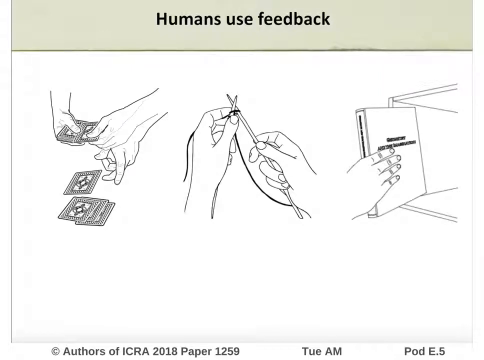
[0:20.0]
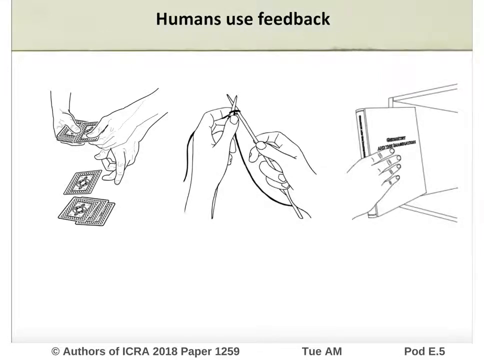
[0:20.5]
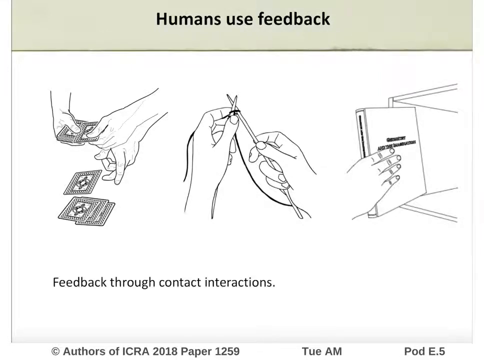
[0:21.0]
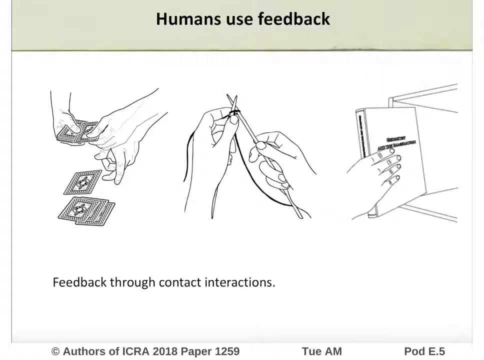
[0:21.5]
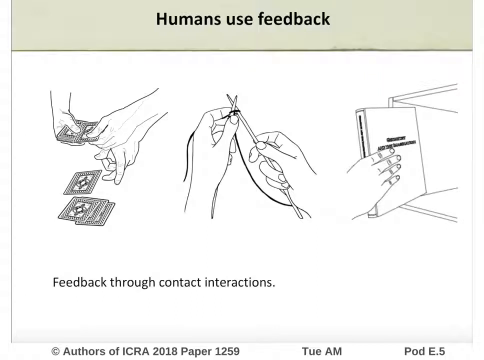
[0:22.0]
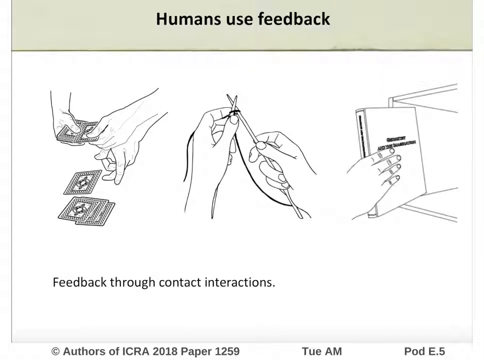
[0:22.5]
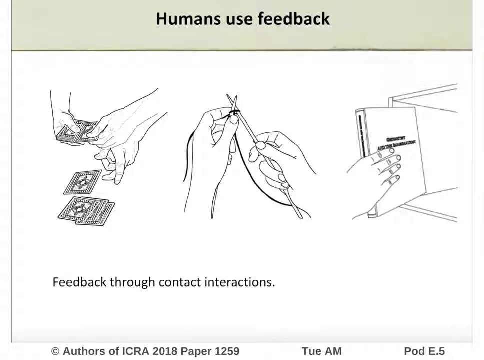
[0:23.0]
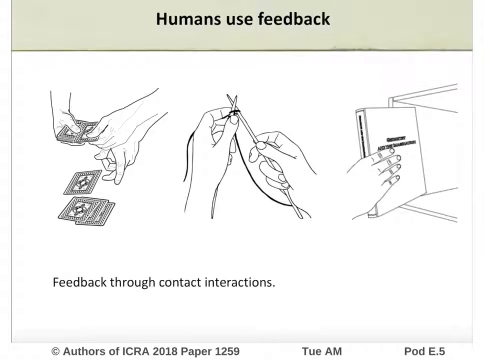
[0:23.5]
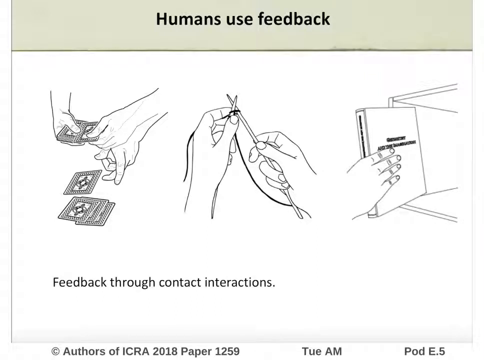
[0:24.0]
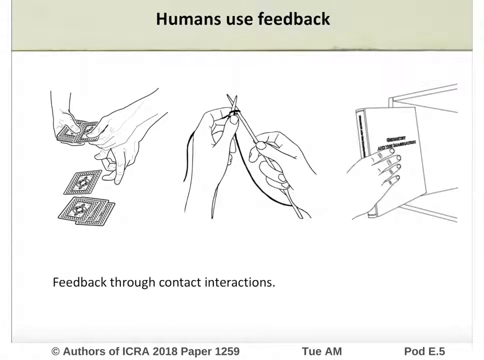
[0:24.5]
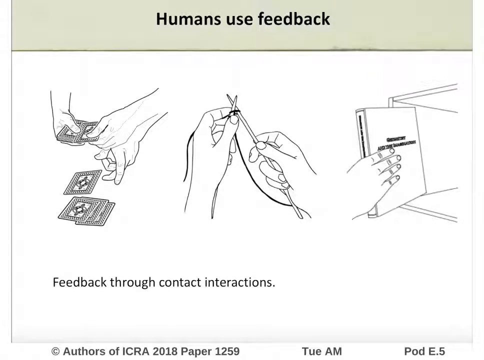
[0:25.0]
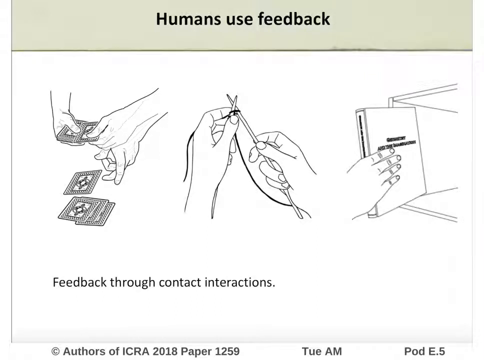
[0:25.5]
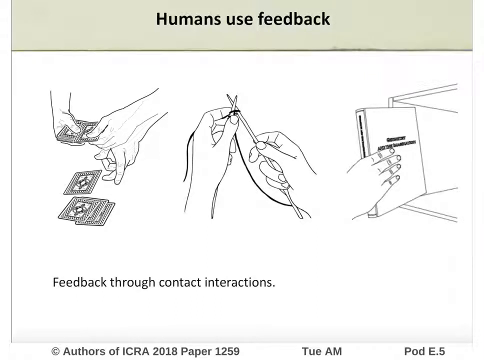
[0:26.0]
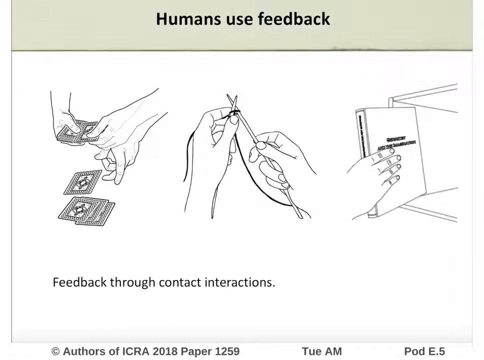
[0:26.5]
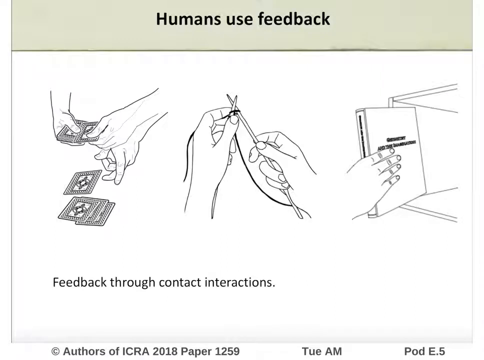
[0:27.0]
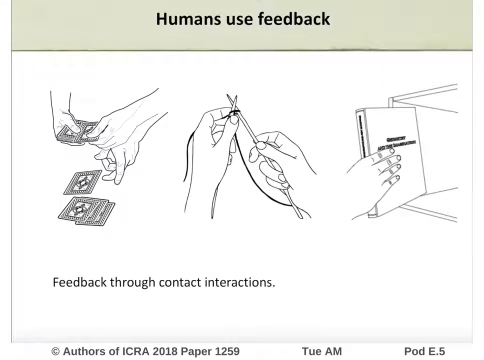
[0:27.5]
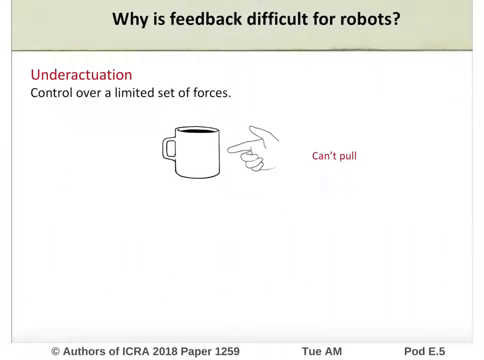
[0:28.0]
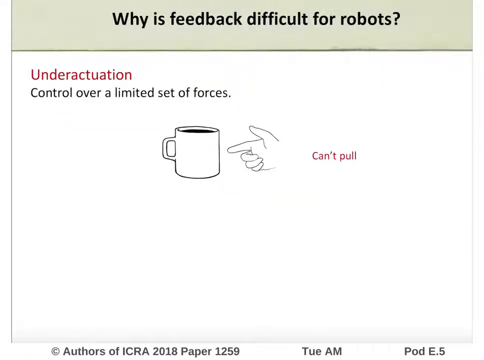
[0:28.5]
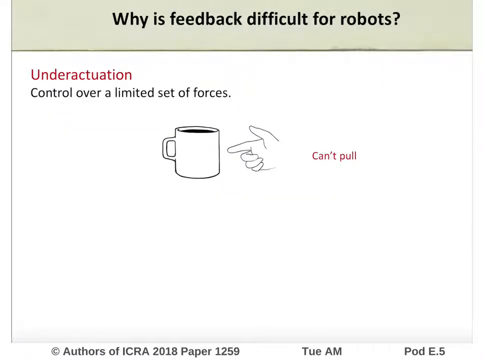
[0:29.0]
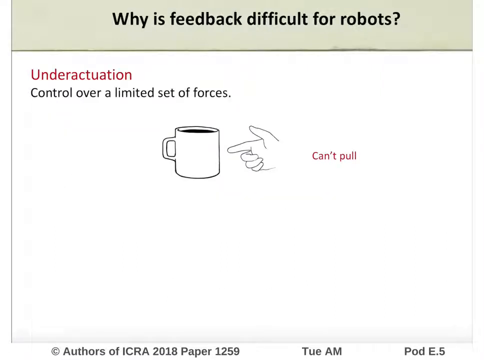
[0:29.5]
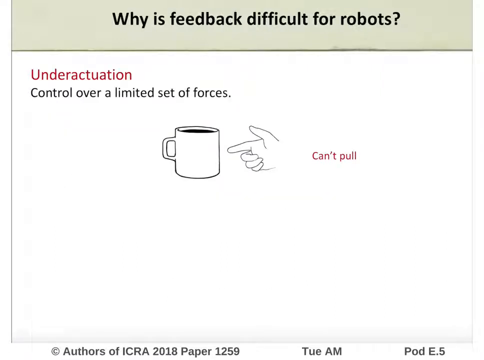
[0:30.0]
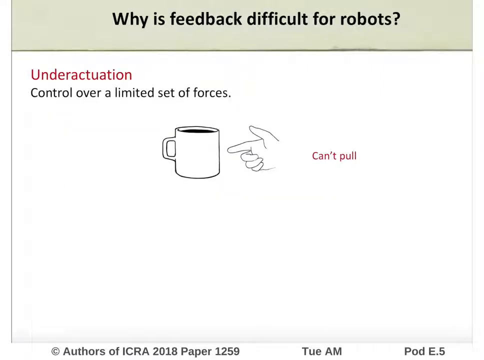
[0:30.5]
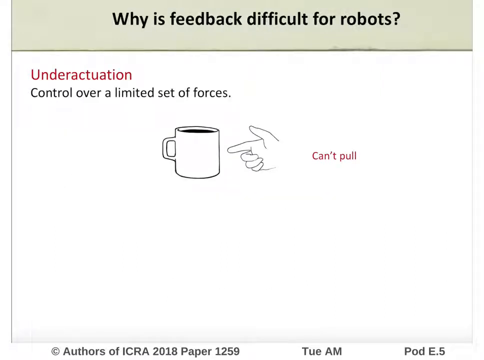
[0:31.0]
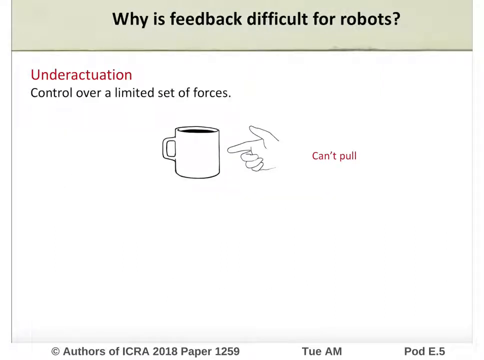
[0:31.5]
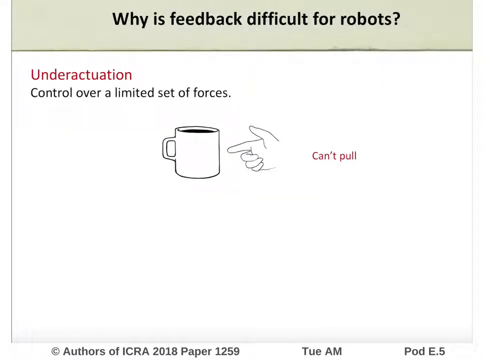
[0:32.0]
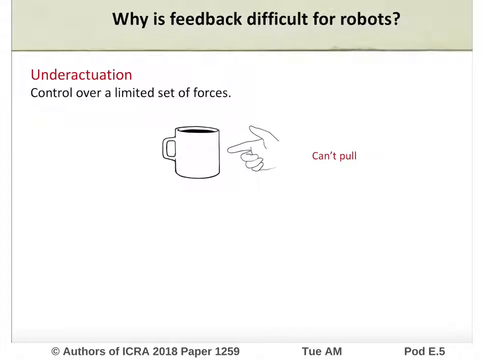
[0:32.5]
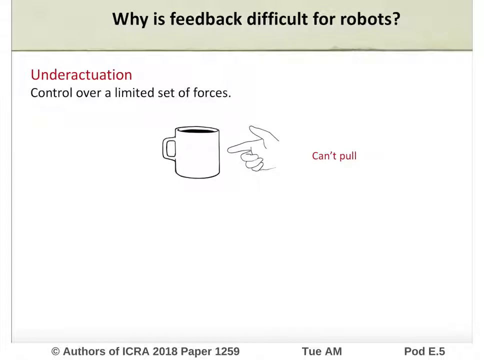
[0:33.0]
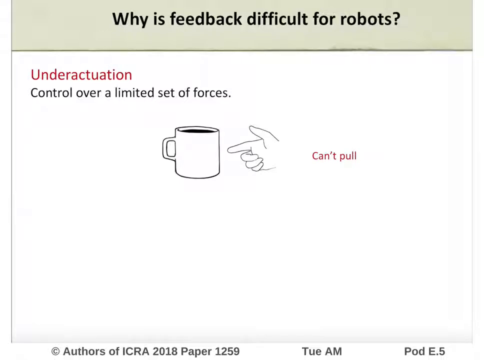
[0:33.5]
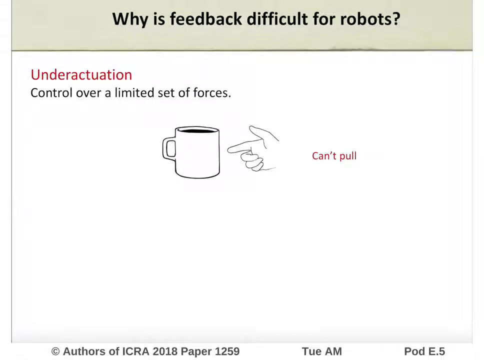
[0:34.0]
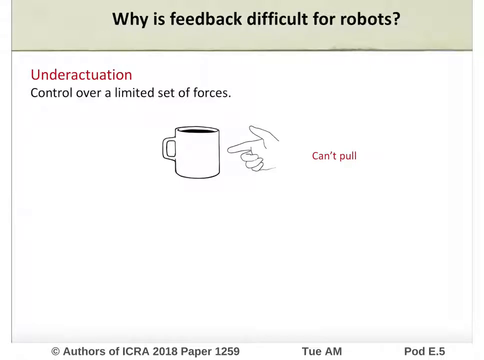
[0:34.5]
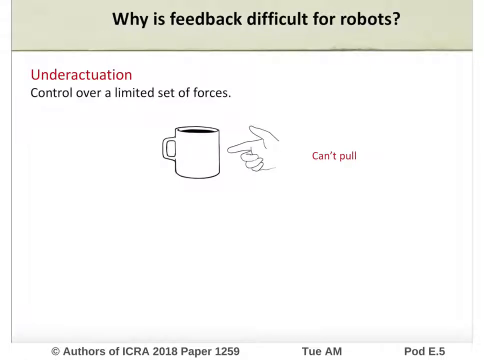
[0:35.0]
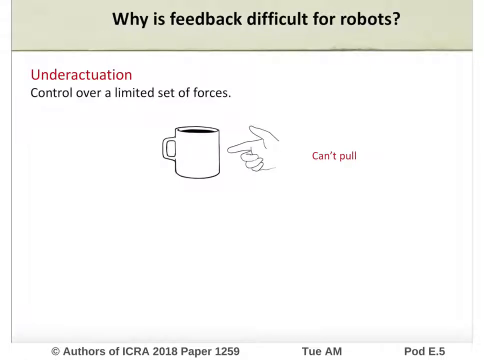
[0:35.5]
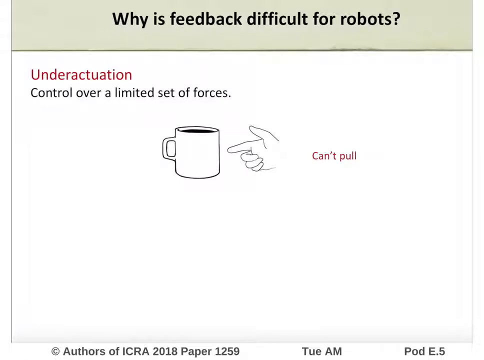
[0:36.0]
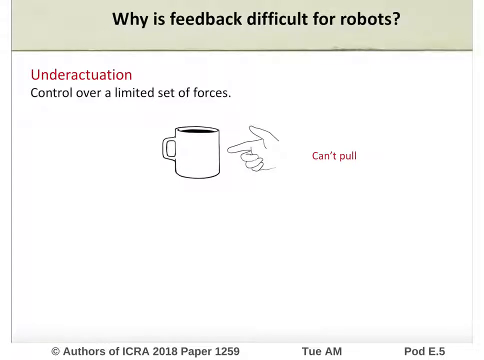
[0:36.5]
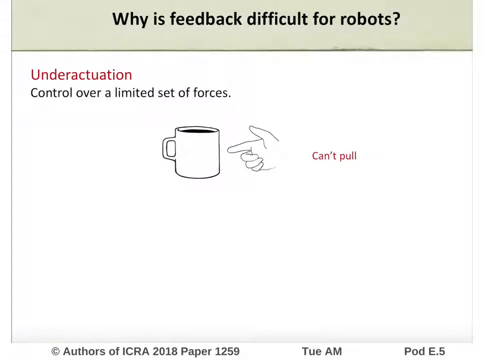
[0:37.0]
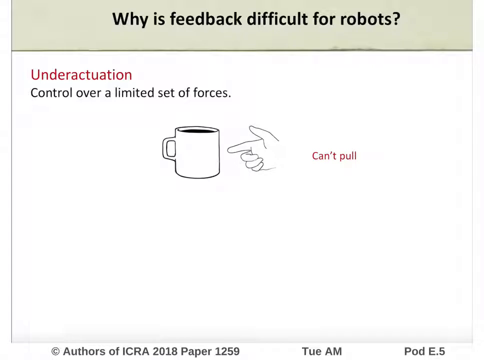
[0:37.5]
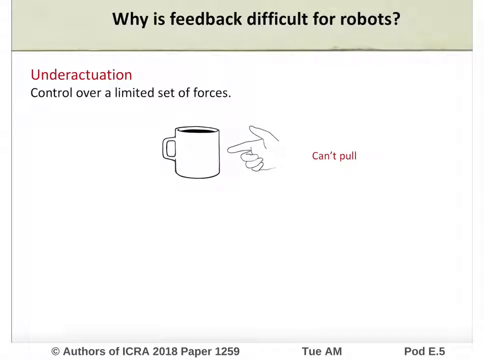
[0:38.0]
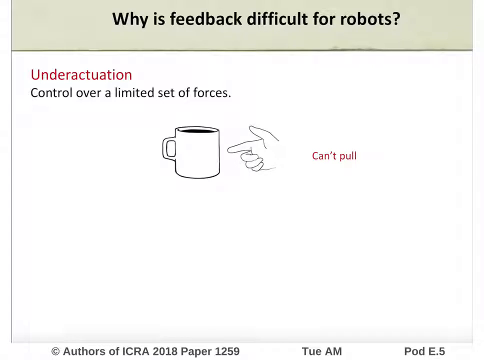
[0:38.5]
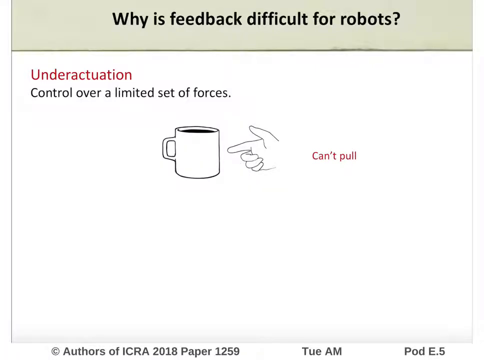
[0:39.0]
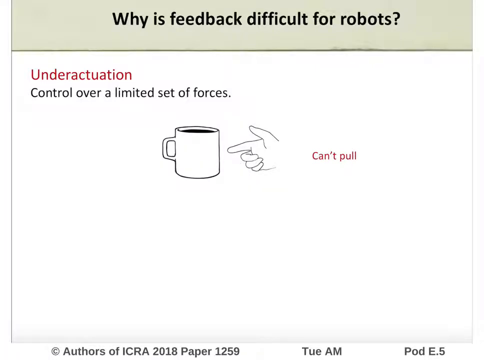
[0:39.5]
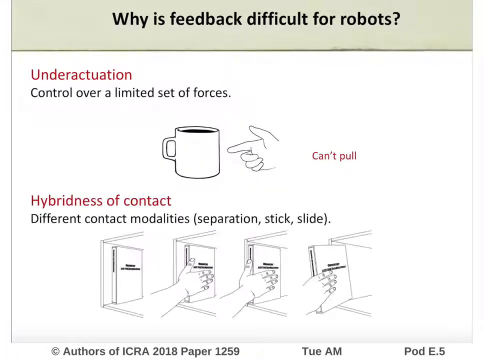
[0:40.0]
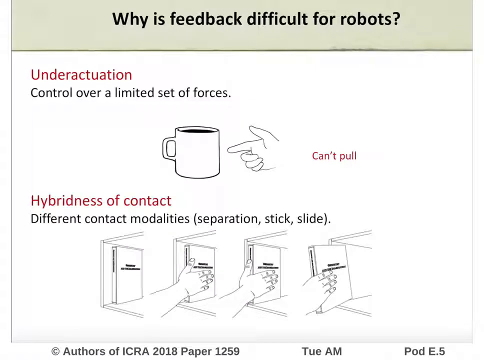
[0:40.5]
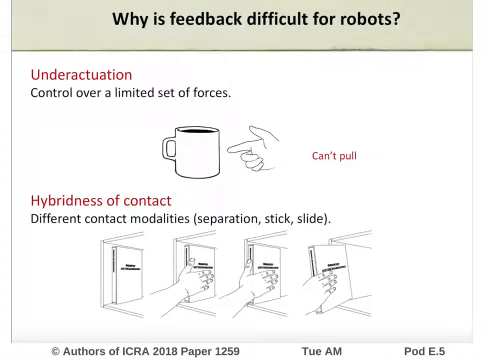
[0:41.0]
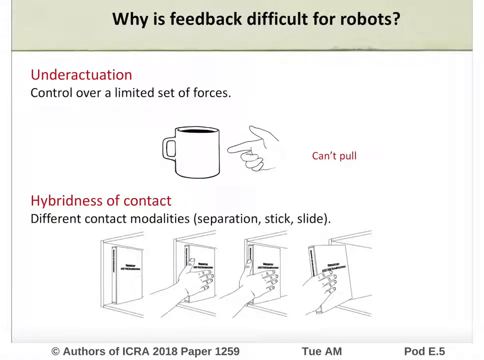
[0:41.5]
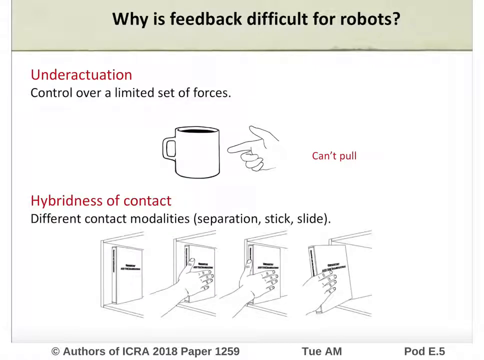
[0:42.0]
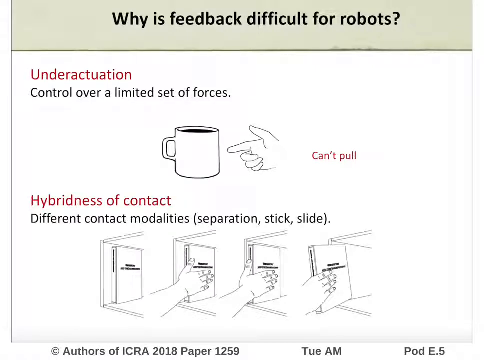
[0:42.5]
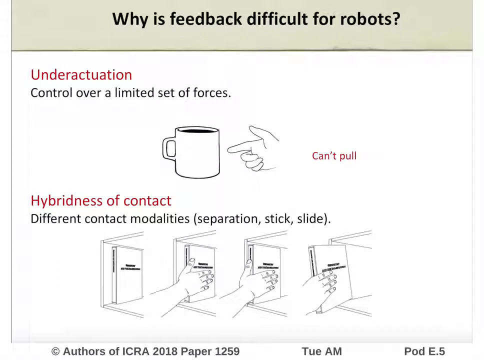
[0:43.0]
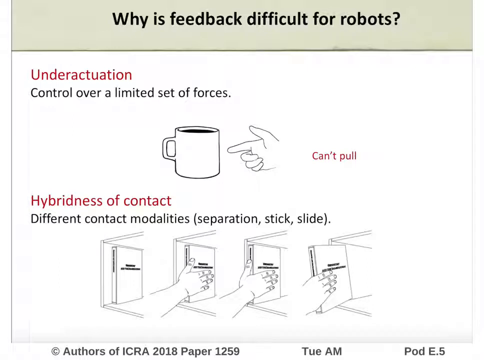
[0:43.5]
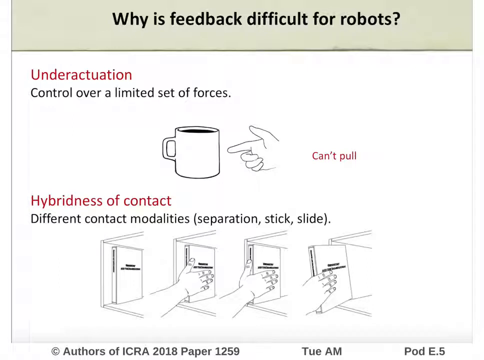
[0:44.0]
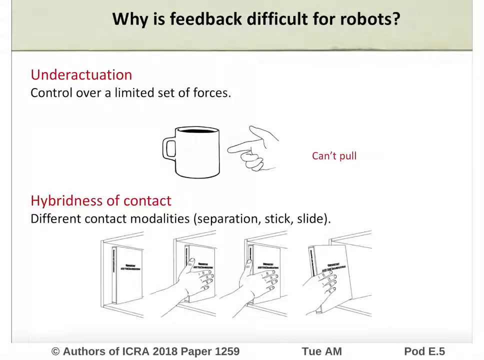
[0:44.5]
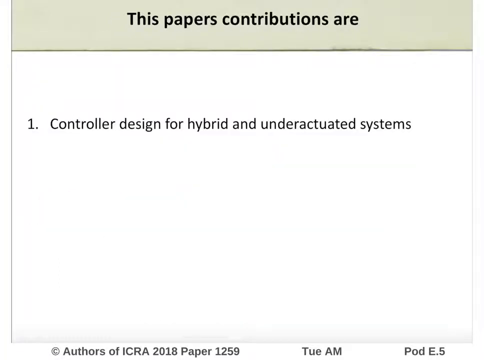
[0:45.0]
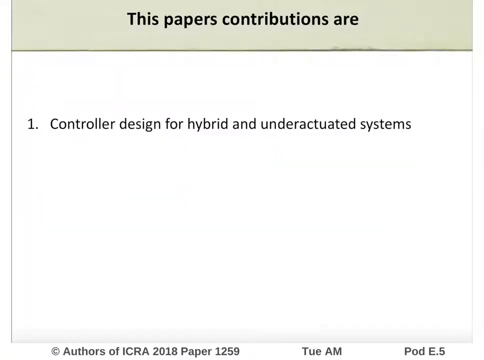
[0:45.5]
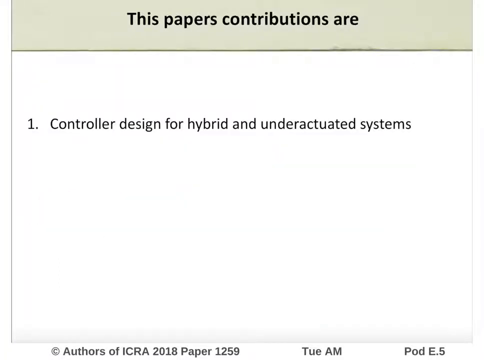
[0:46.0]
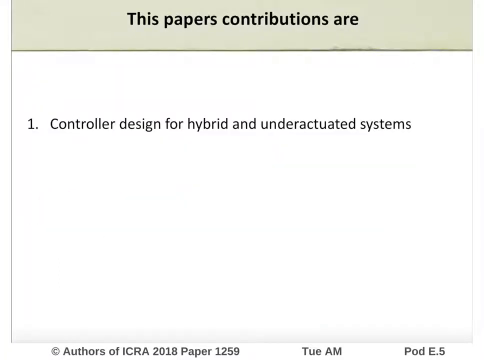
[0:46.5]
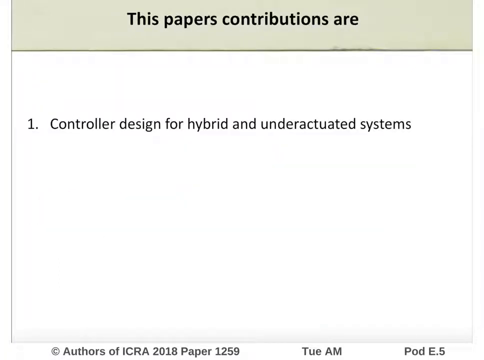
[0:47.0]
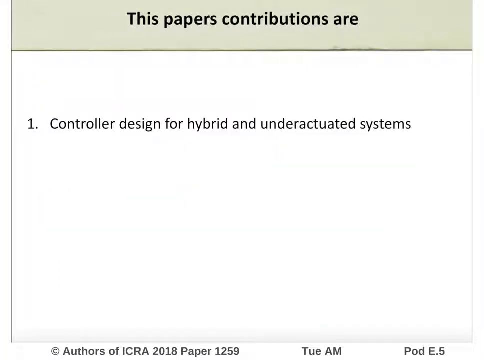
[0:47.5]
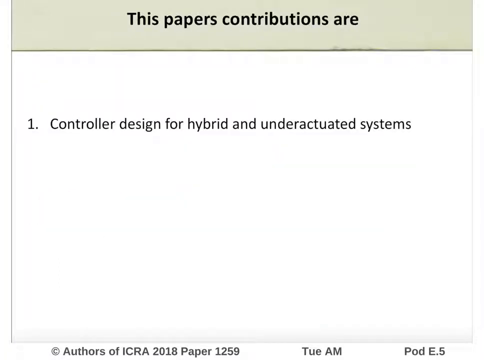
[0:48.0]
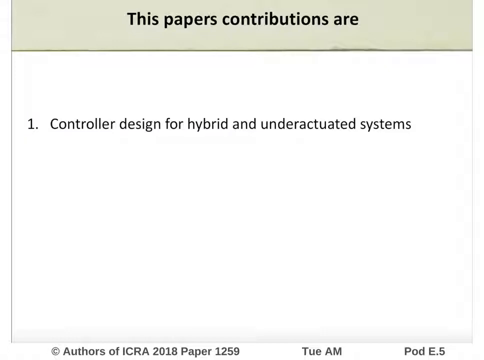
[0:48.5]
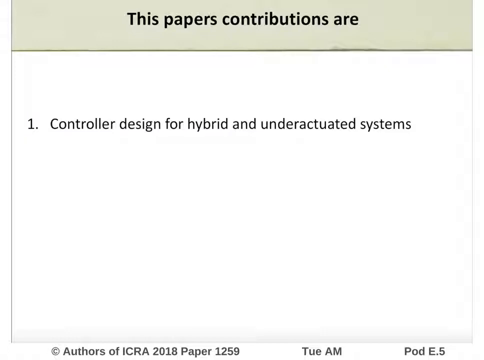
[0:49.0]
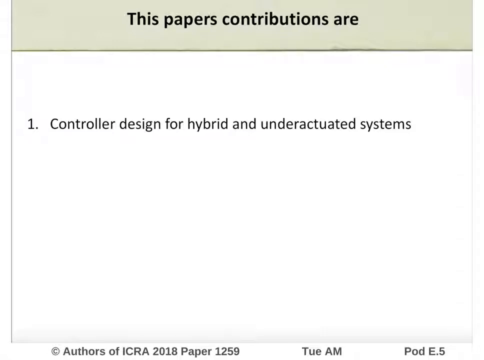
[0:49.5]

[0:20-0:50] Under "humans use feedback" there are three pictures: the first is someone apparently dealing out cards, the second is someone starting to sew something, and the third looks like someone reaching in to maybe grab a book. There are some words on it that cannot be made out, so the item could be a book or maybe a movie. The text then reads "feedback through contact interactions." Next comes "why is feedback difficult for robots?" with "under actuation, control over a set of forces": a coffee cup is shown with a hand that is not on the cup, and the text says it can't pull. Then "hybridness of contact" is shown with different contact modalities: separation, stick, and slide. Finally the paper's contributions begin with number one, "controller design for hybrid and under-actuated systems."